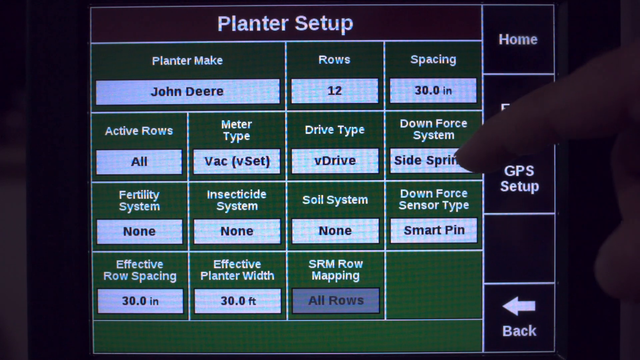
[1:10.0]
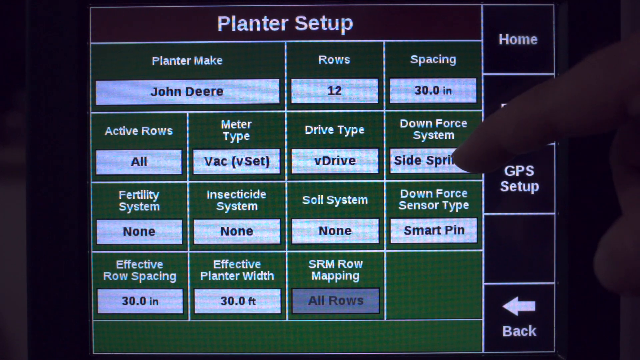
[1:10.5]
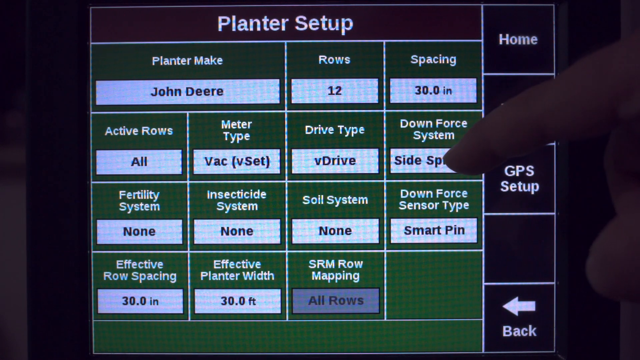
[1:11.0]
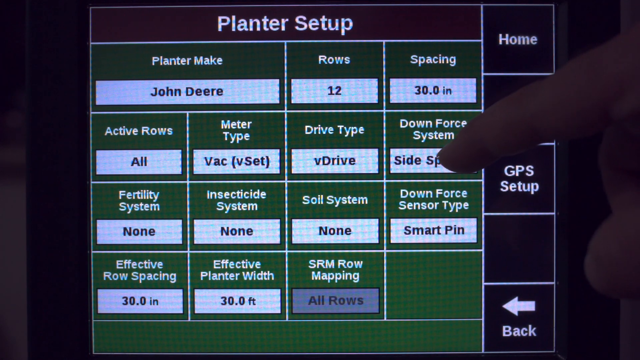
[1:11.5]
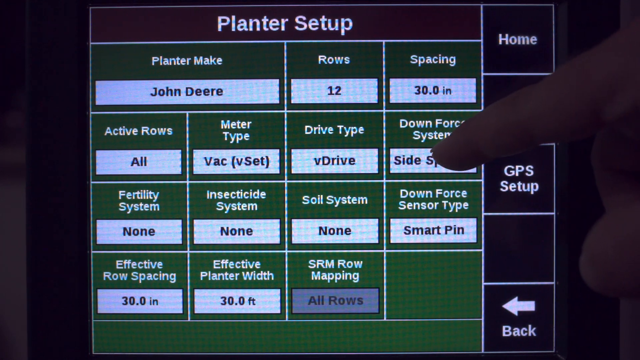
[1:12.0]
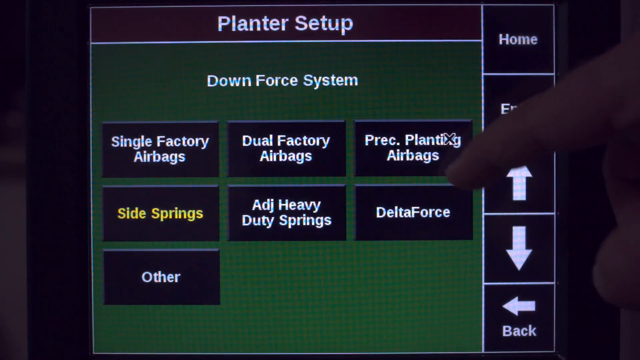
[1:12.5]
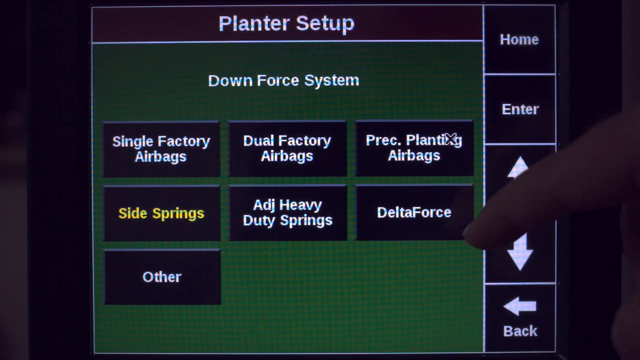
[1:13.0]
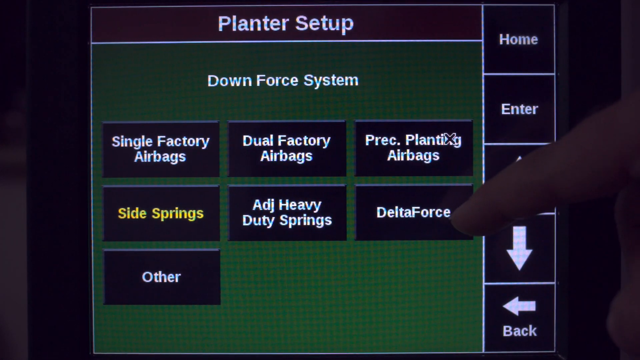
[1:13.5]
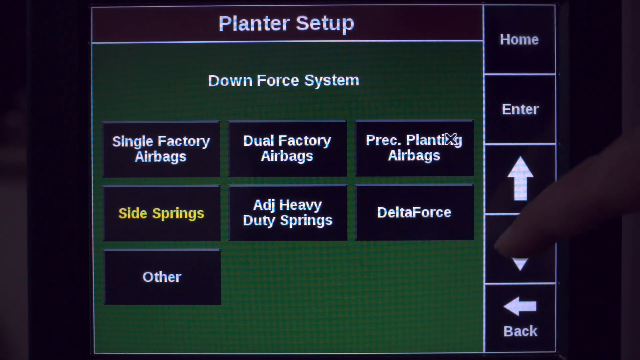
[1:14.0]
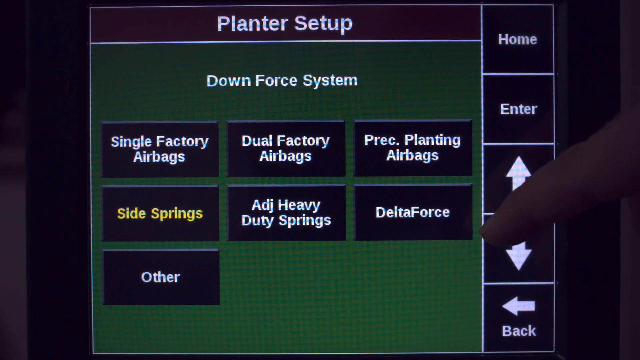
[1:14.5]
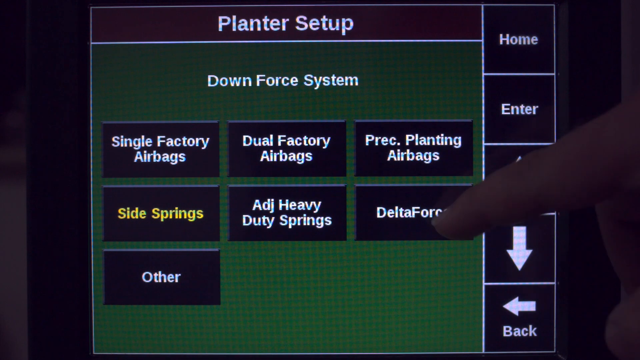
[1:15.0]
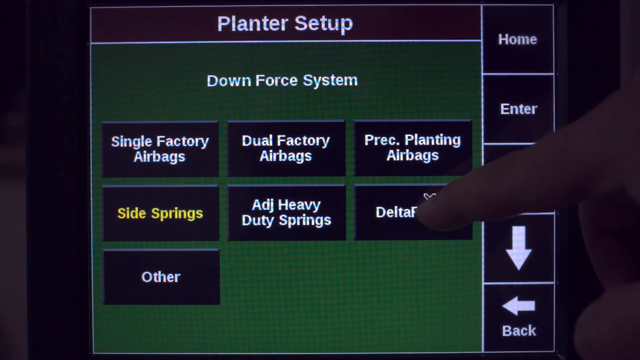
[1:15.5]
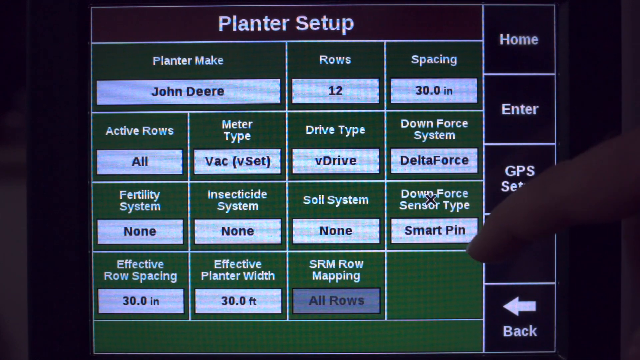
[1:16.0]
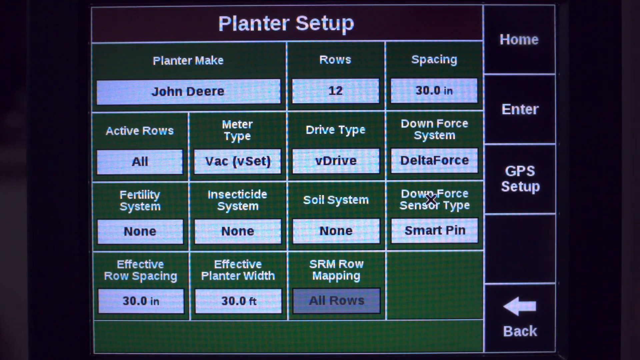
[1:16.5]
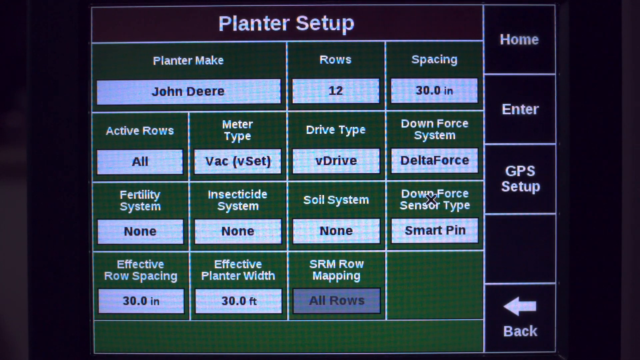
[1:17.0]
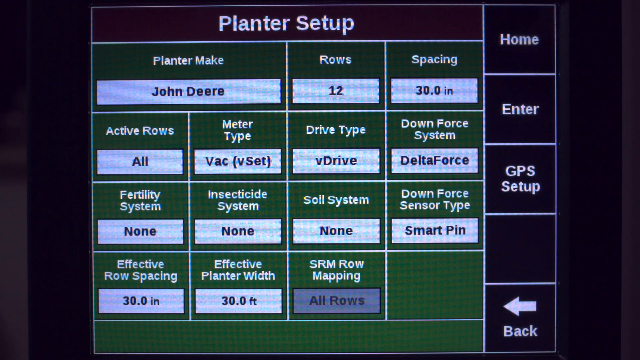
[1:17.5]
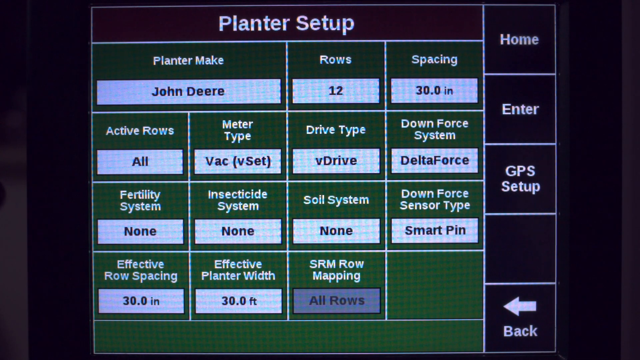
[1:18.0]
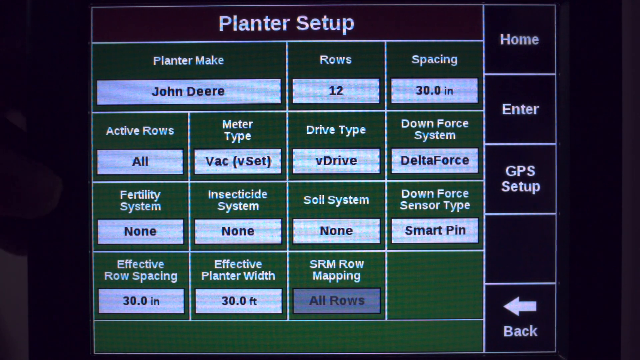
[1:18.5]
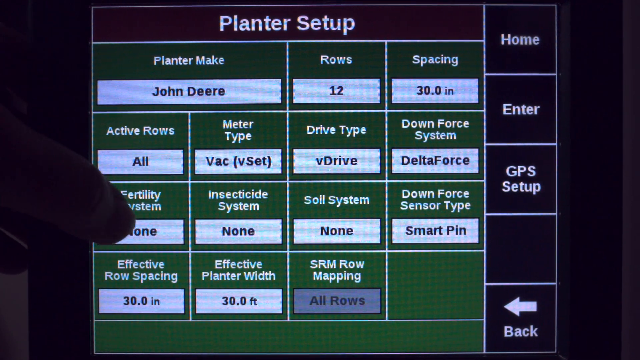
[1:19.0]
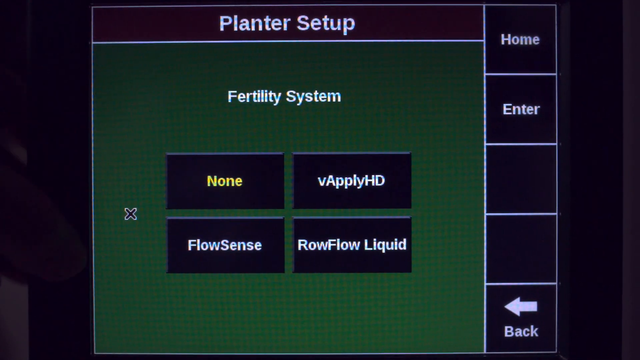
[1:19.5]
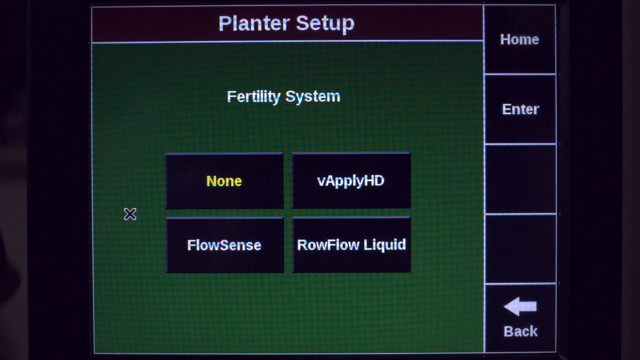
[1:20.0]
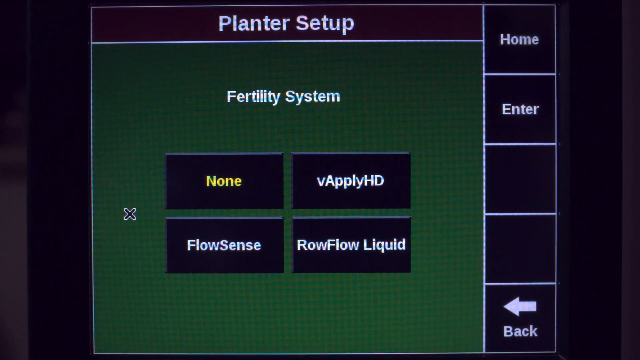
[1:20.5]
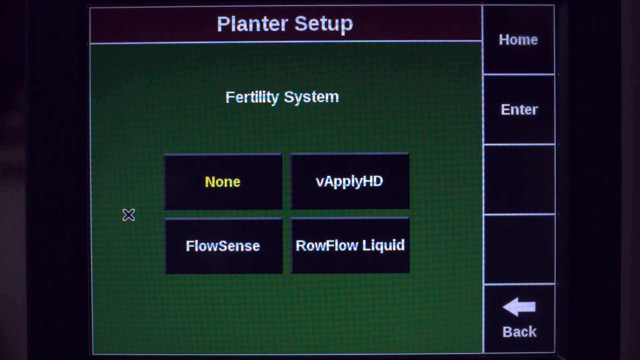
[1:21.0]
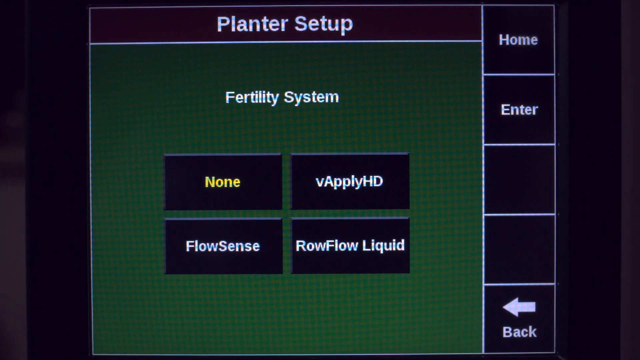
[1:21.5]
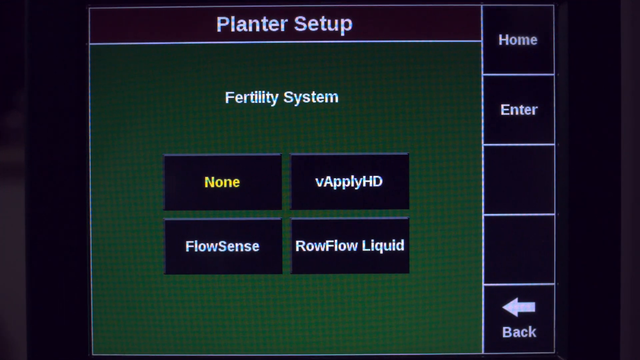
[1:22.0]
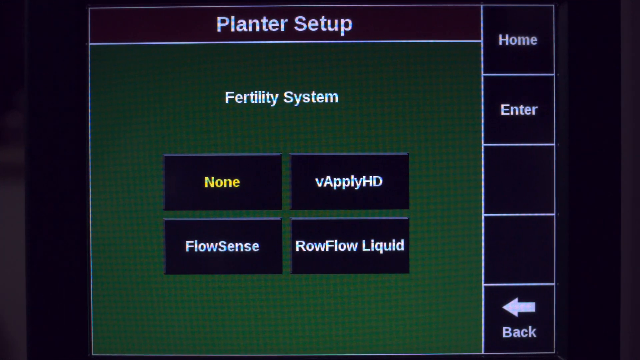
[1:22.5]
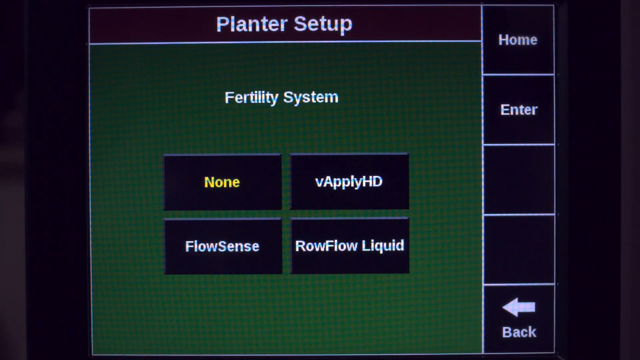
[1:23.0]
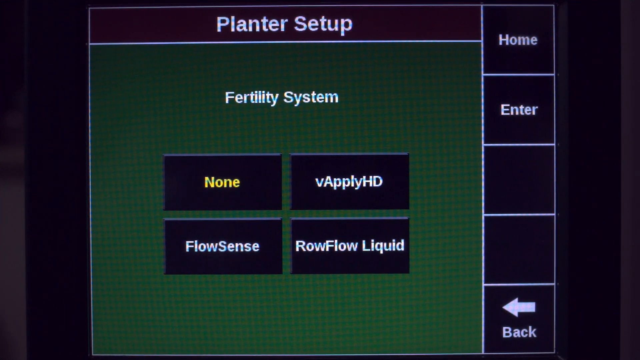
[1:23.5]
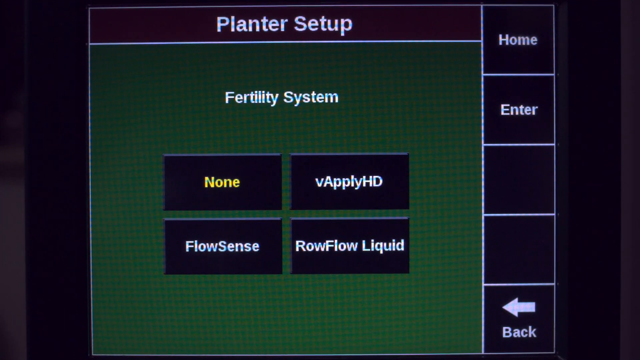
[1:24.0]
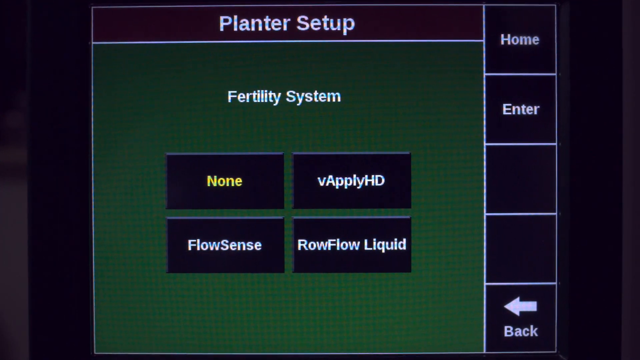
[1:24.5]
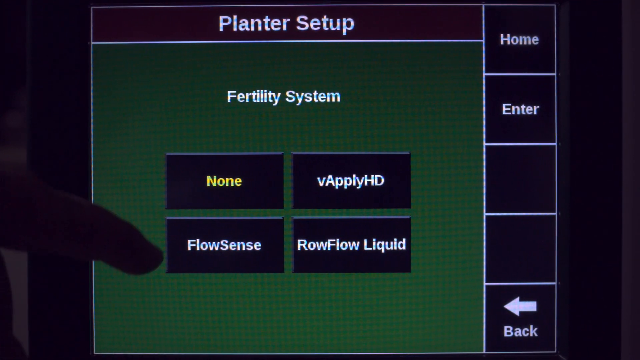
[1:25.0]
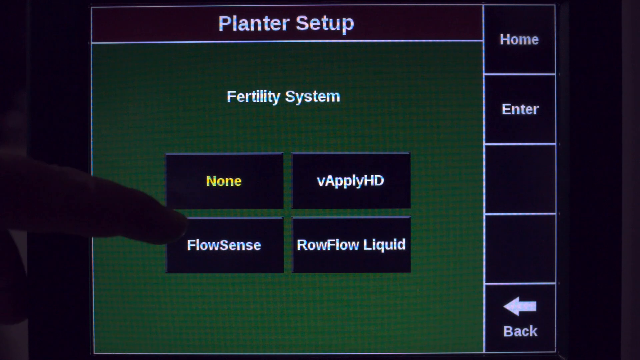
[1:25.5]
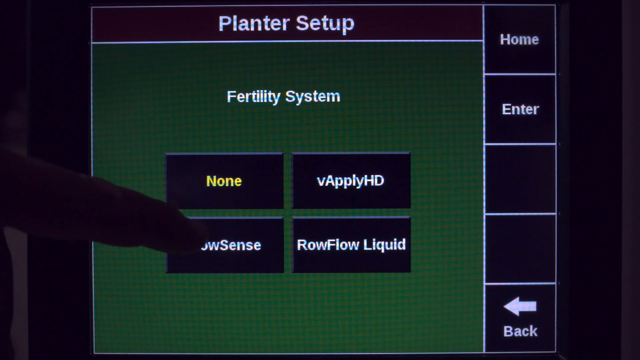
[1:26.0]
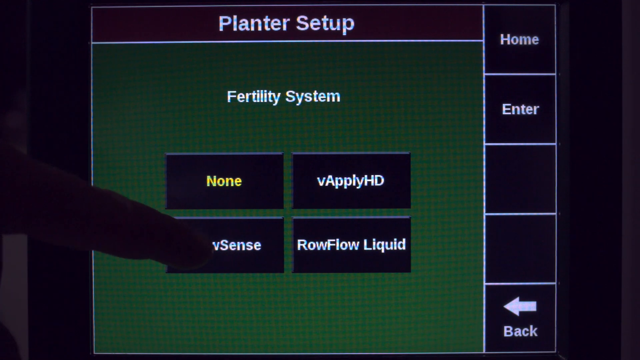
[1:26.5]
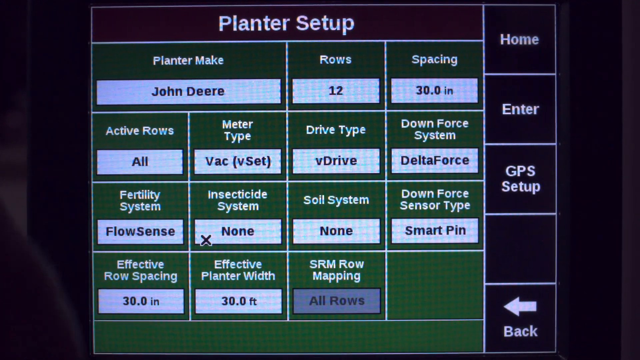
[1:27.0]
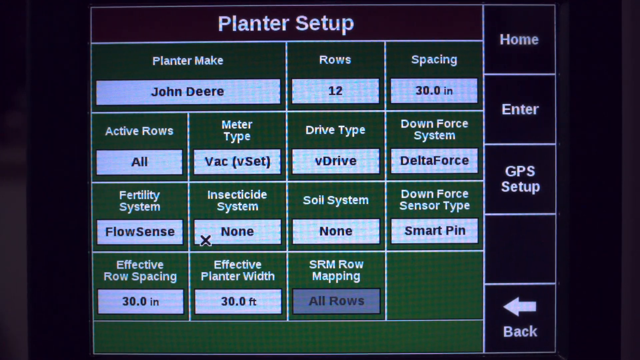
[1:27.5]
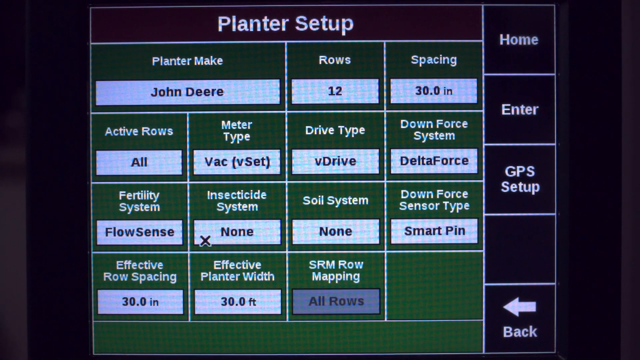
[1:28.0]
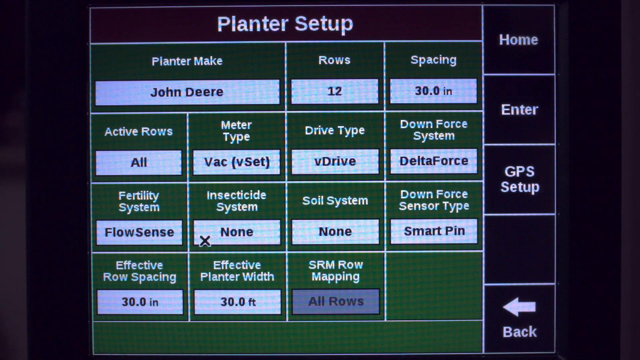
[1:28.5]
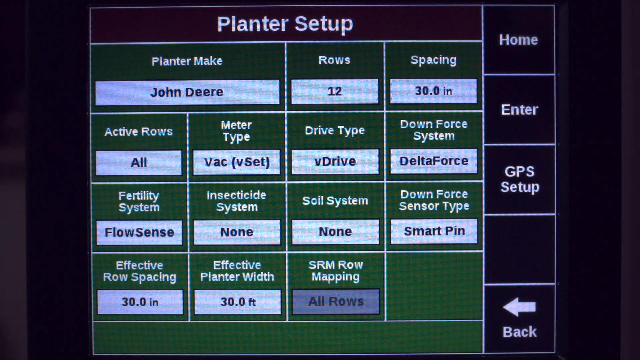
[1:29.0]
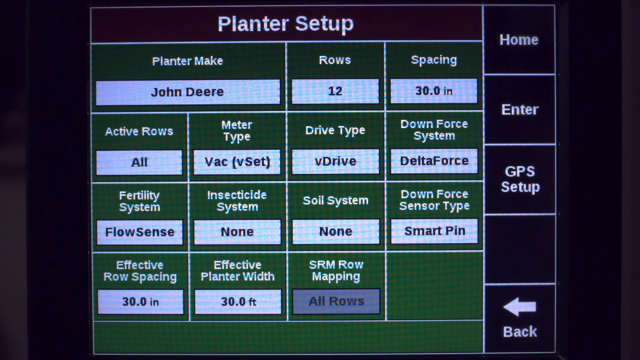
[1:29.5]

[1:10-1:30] A page on a computer screen says "Planter Setup" at the top, with rows going across. Planter make says "John Deere", rows says "12", spacing says "30.0 inches", active rows says "all", meter type says "vac", drive type says "V drive", and downforce system says "side spring"; the page continues further down. A person clicks on the left side for the fertility system, which has options for "none" or "flow sense", and selects flow sense. They then go up to downforce system and click on side spring.